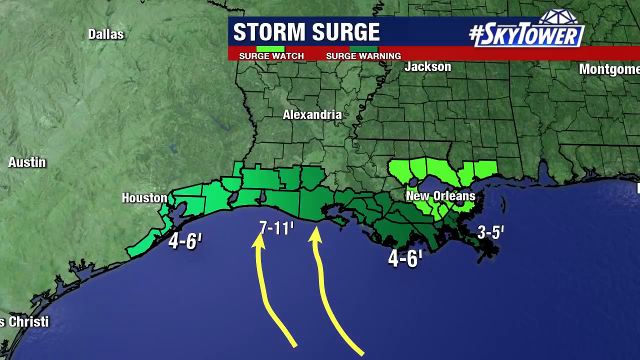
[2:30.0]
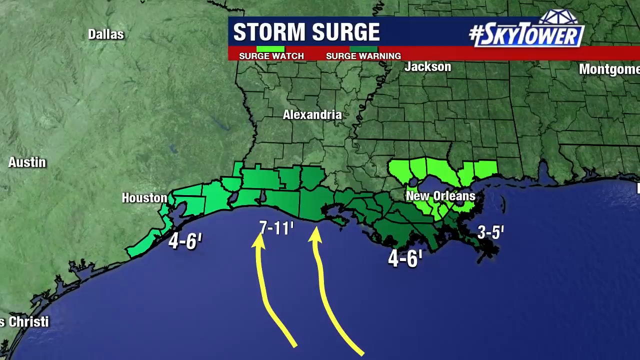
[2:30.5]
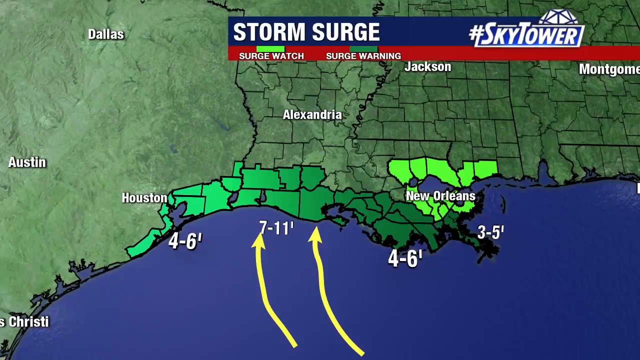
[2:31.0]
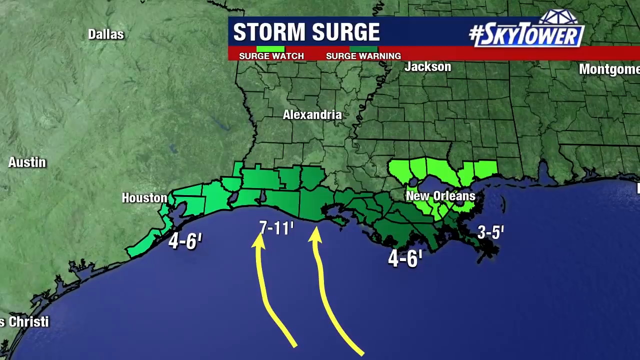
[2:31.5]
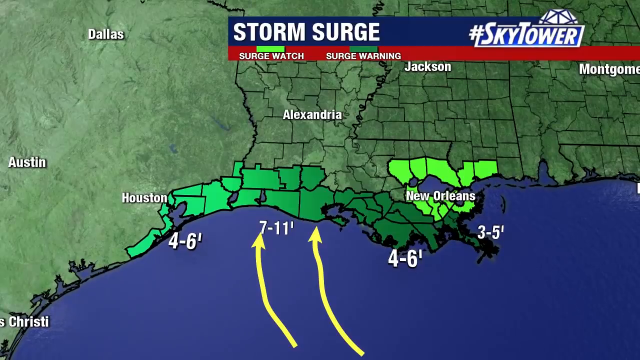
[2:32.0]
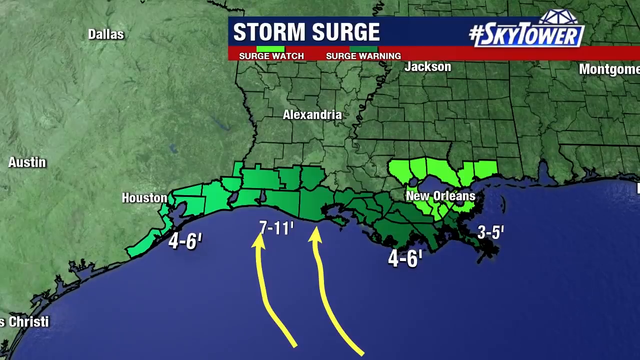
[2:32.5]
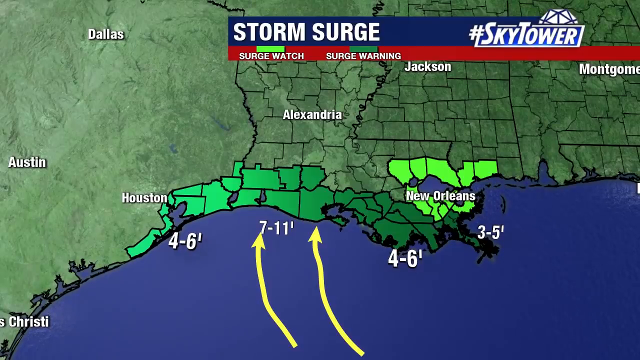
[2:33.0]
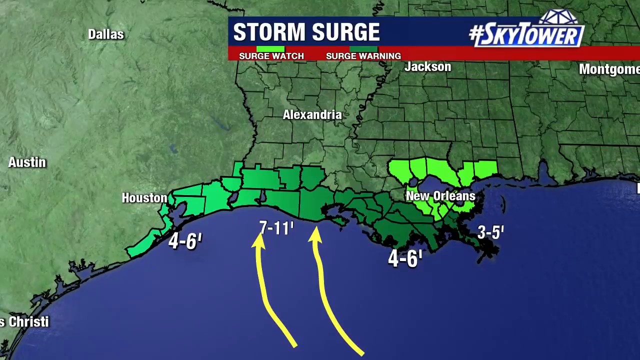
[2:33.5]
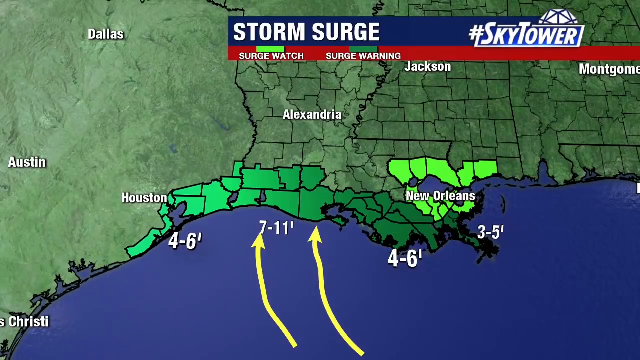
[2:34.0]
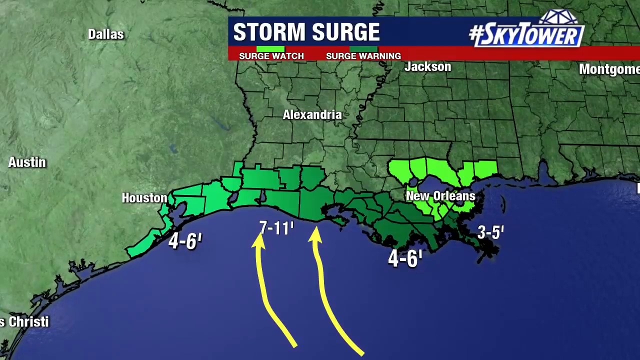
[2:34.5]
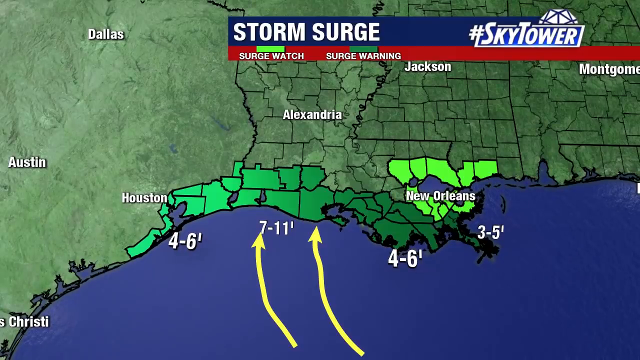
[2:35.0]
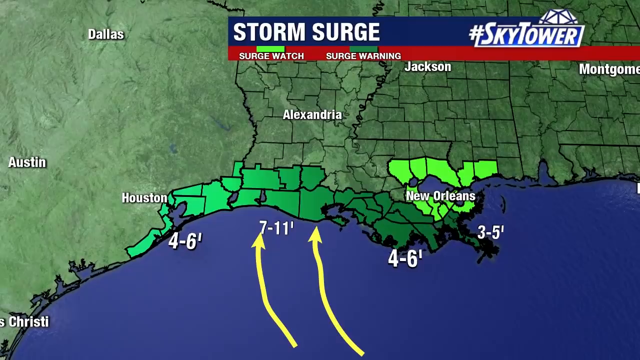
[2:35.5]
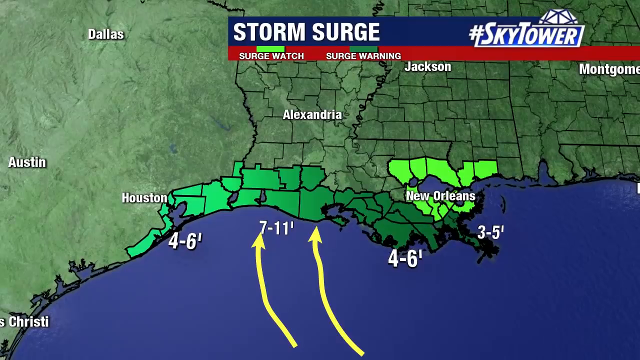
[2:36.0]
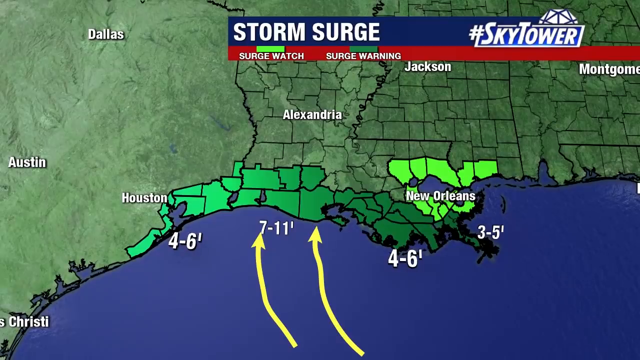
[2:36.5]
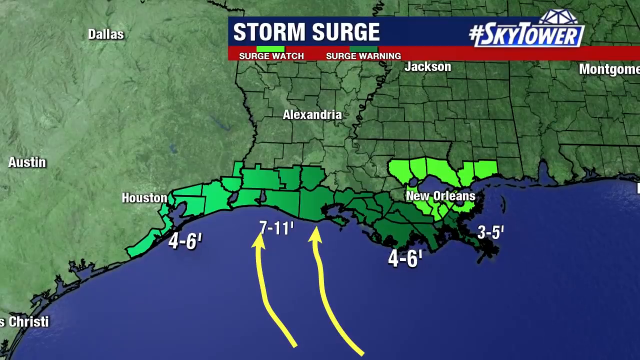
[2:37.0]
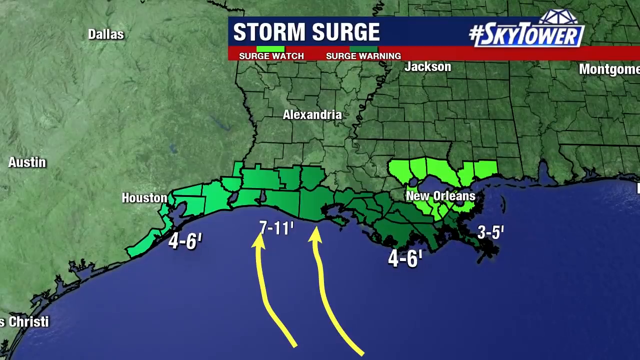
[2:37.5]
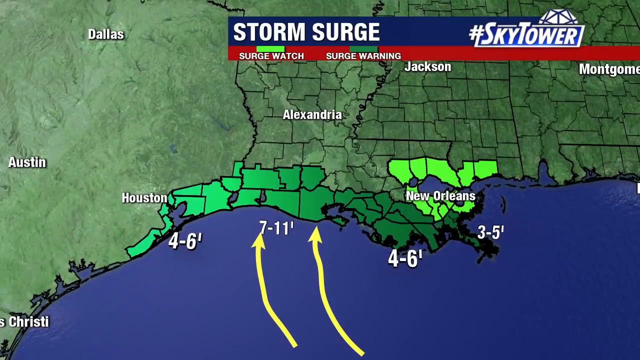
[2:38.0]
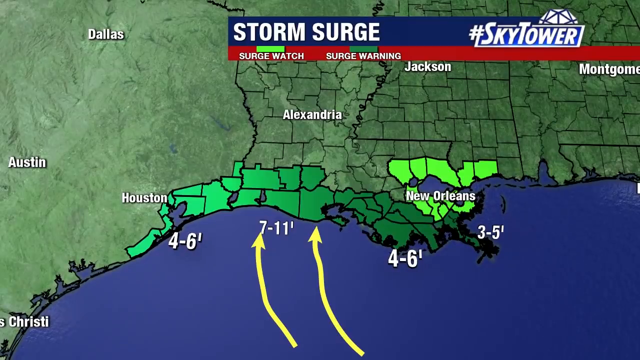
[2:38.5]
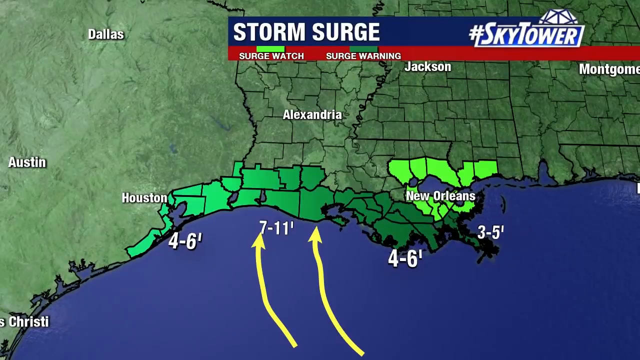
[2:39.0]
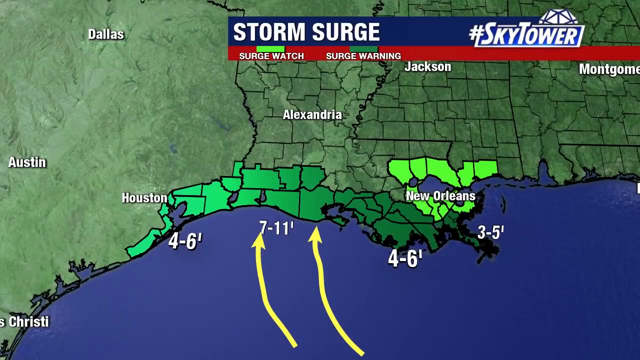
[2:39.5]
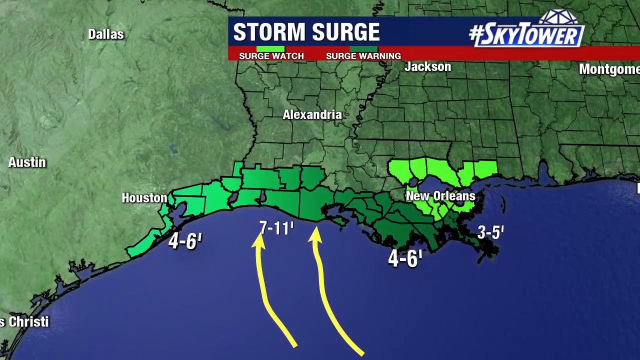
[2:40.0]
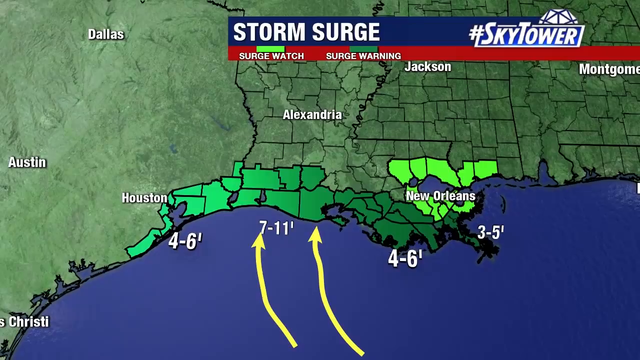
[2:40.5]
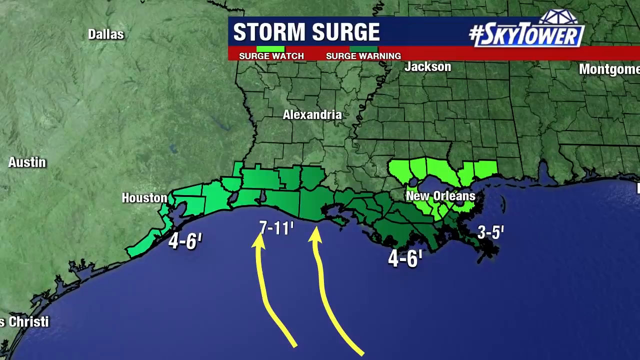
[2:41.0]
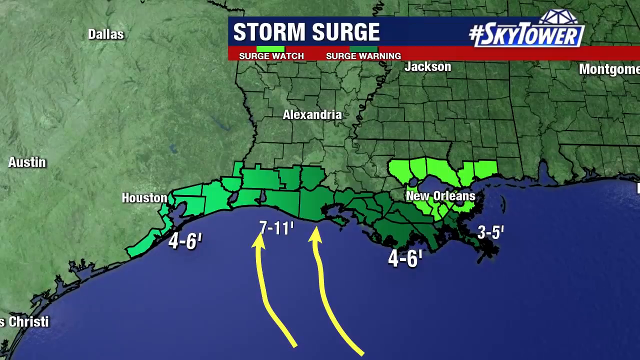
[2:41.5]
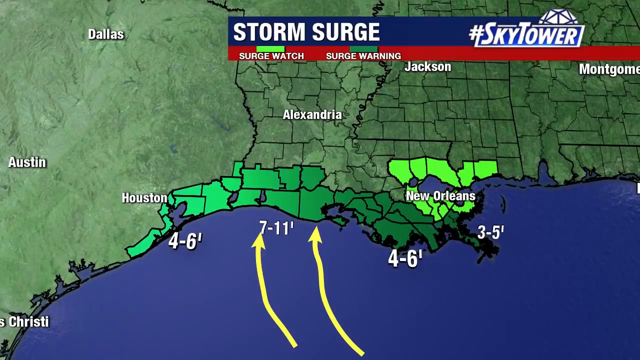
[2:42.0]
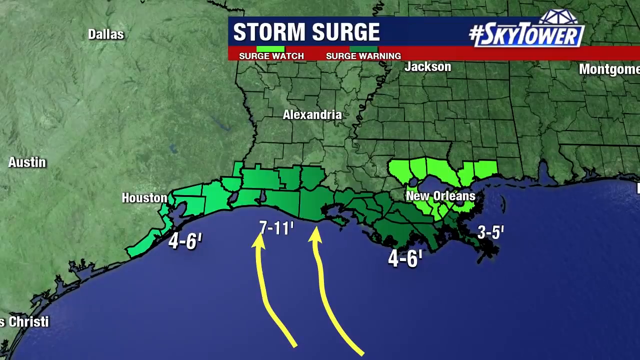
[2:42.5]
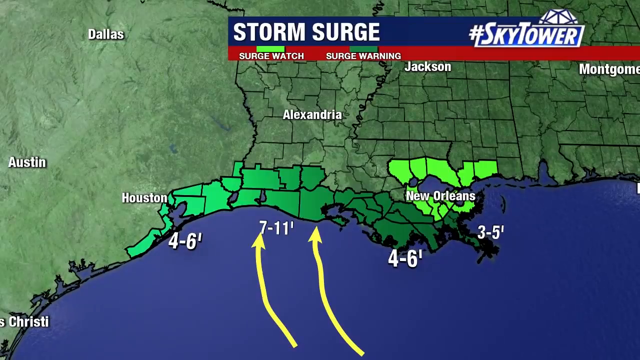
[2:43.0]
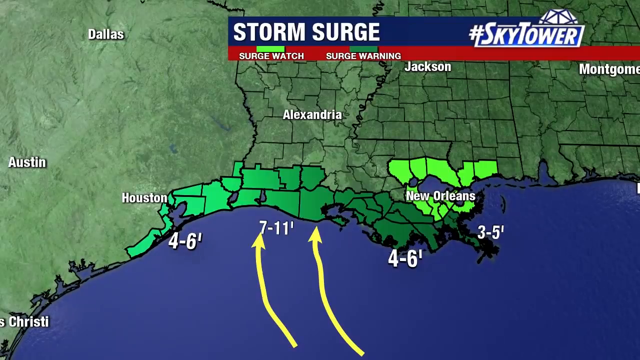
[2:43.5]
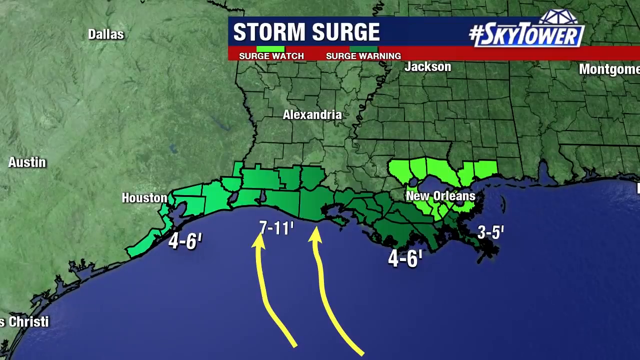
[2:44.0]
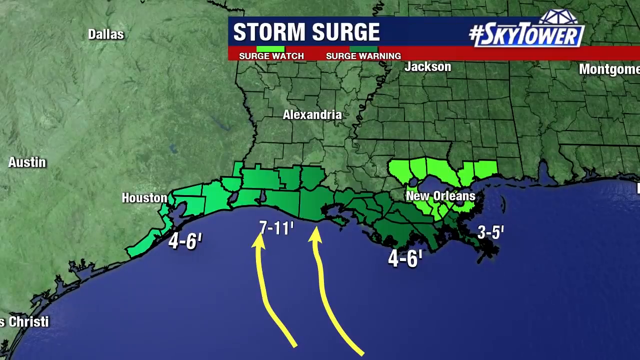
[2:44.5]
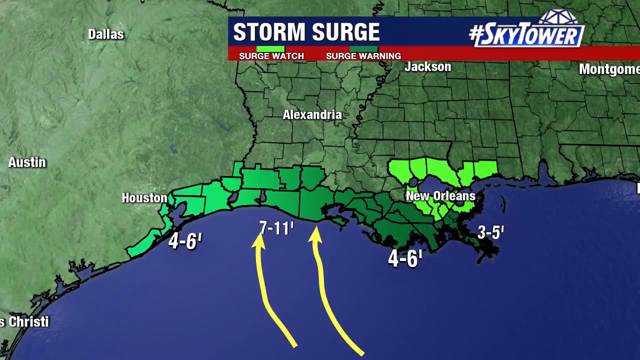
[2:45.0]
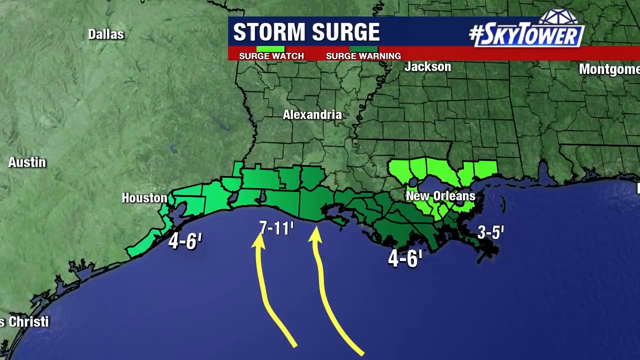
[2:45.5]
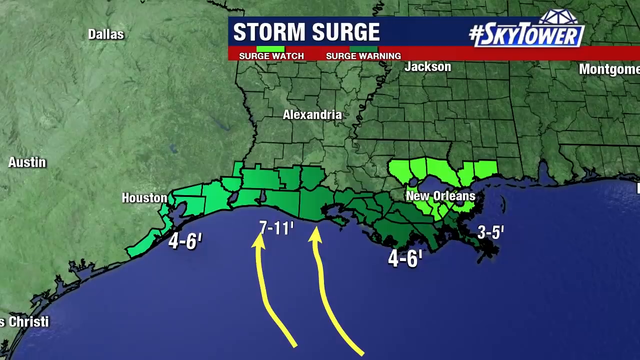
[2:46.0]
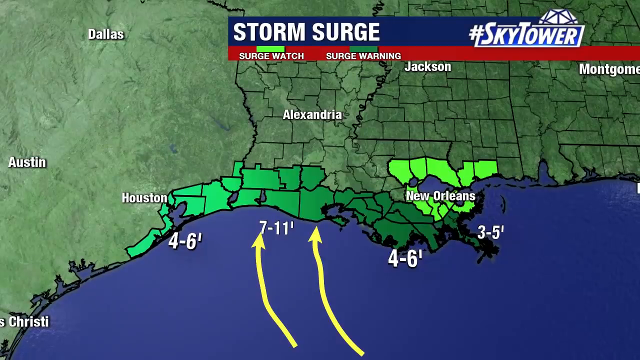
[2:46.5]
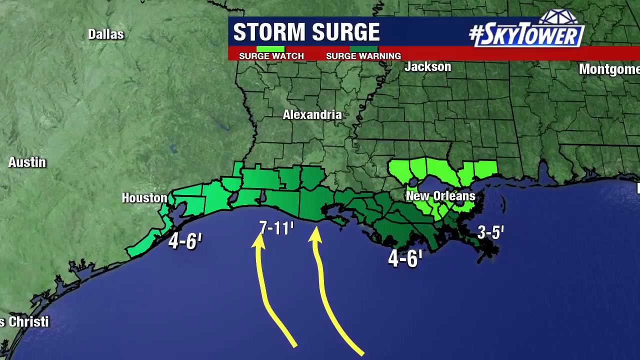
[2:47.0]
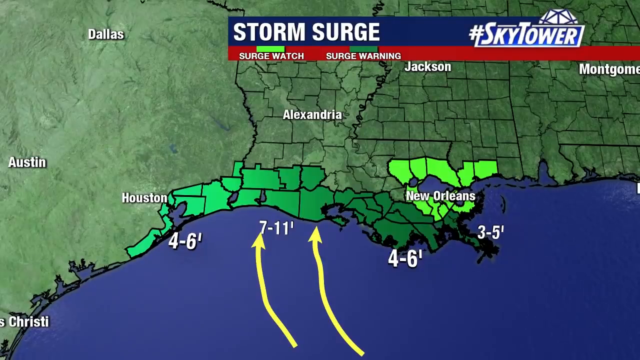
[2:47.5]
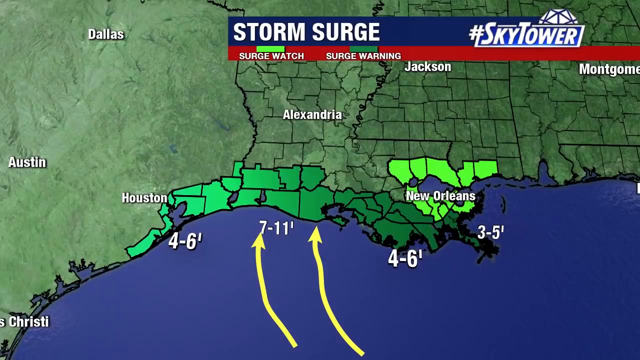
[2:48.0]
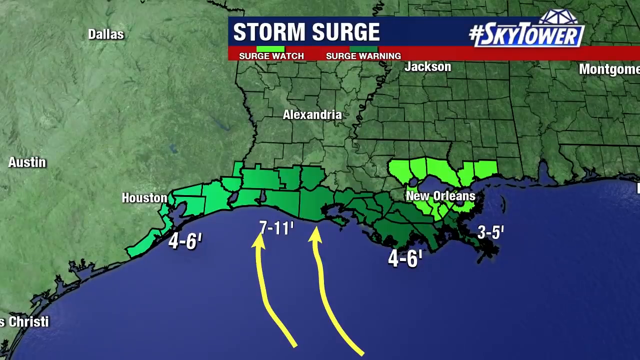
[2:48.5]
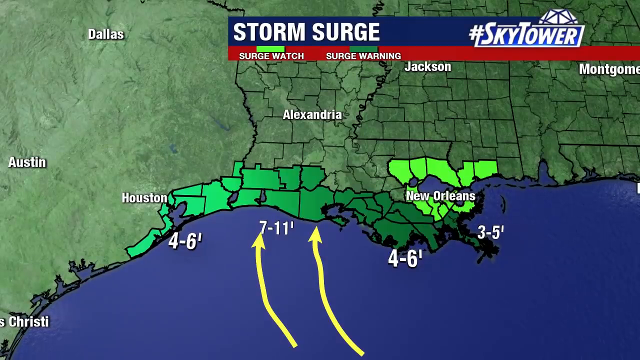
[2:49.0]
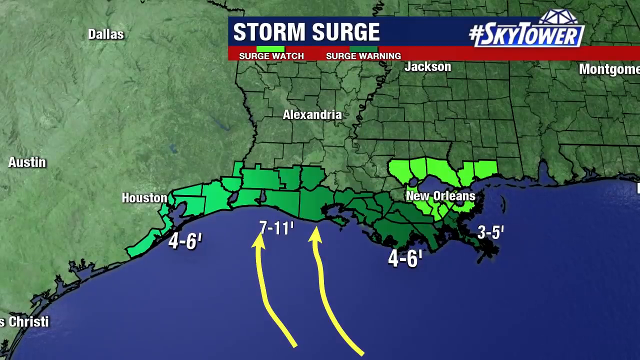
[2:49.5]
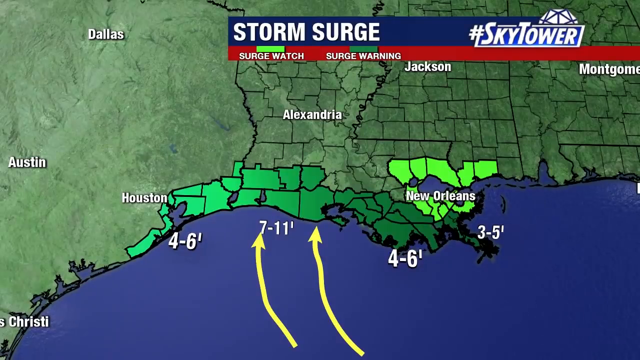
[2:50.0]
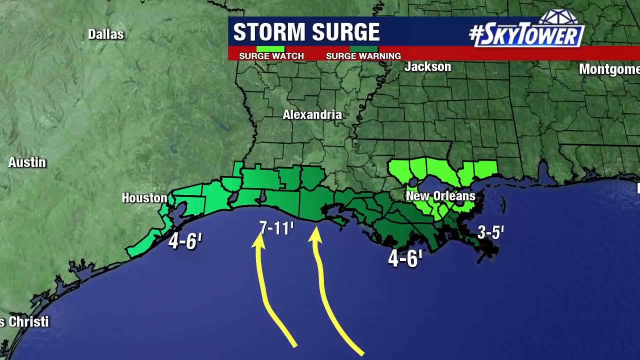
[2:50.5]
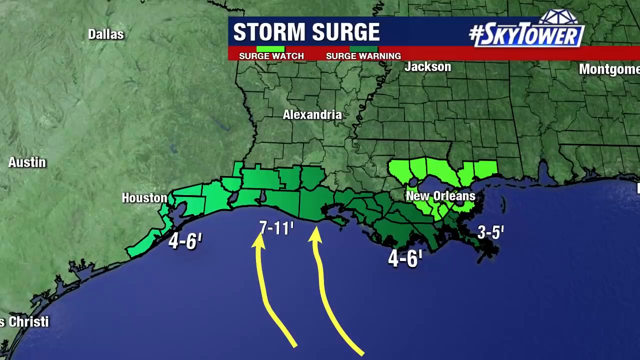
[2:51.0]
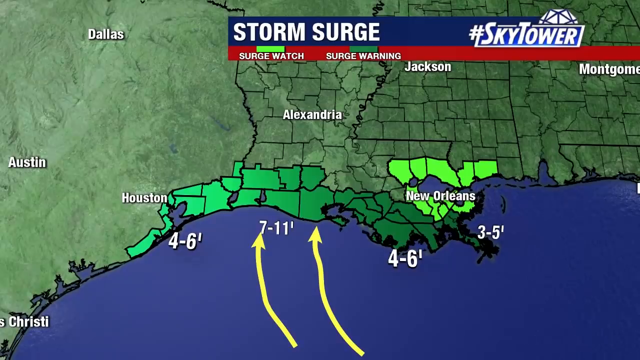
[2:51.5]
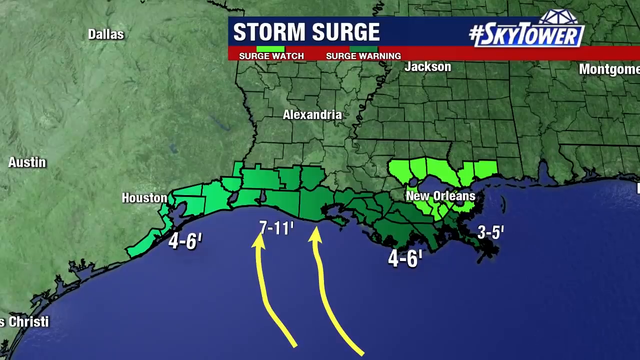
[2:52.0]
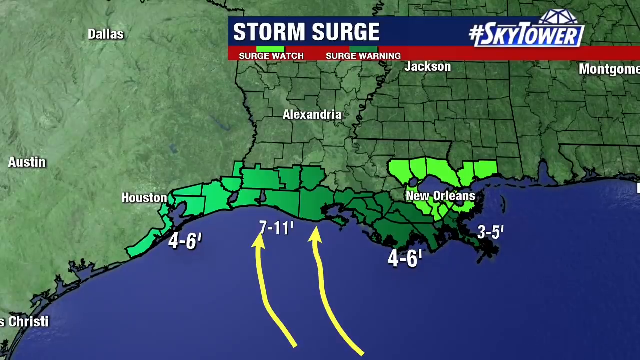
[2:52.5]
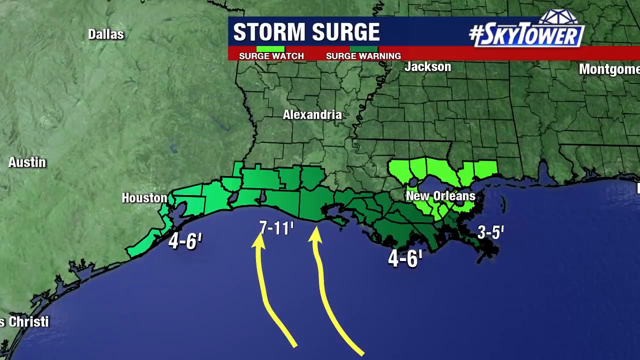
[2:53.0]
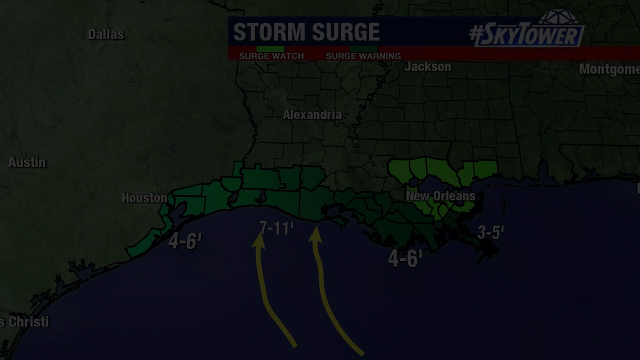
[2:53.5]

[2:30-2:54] The storm surge map continues, with arrows placed where the storm might hit land. The surges shown range from three feet up to 11 feet. Some areas by New Orleans are under a surge watch, while other areas are under a surge warning.